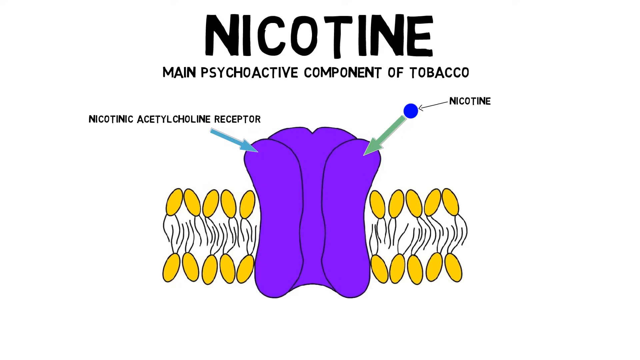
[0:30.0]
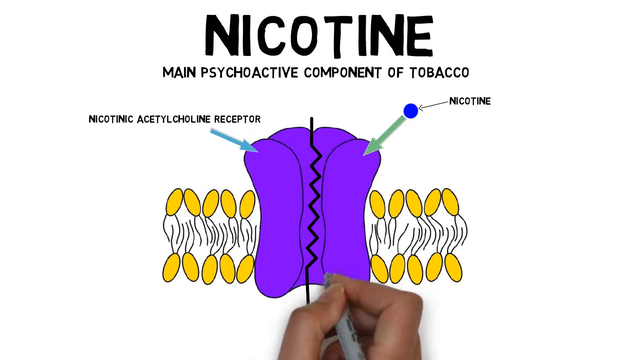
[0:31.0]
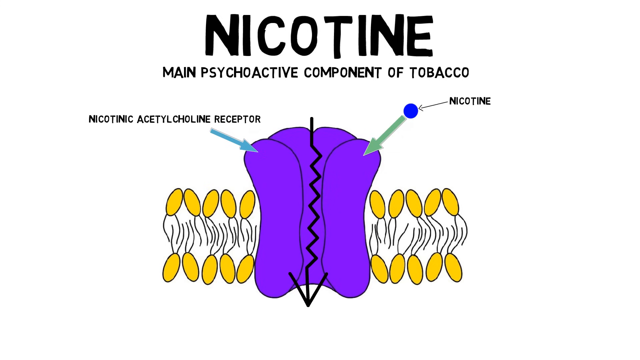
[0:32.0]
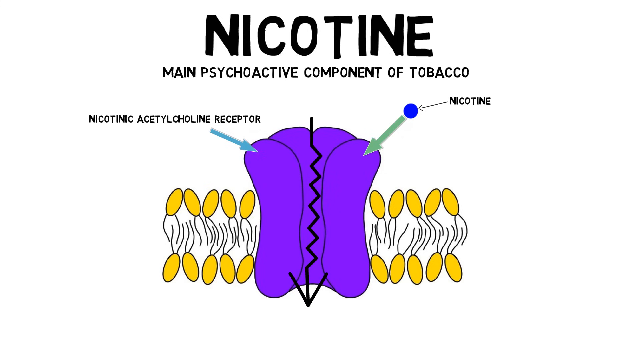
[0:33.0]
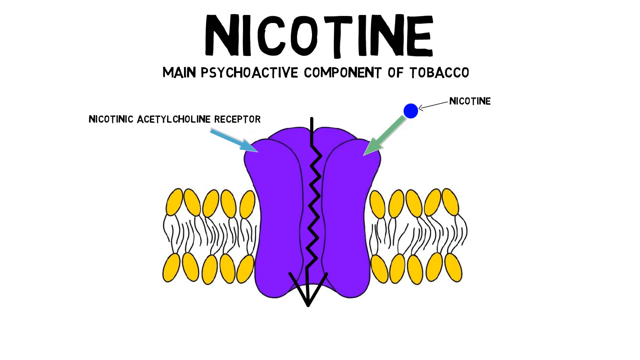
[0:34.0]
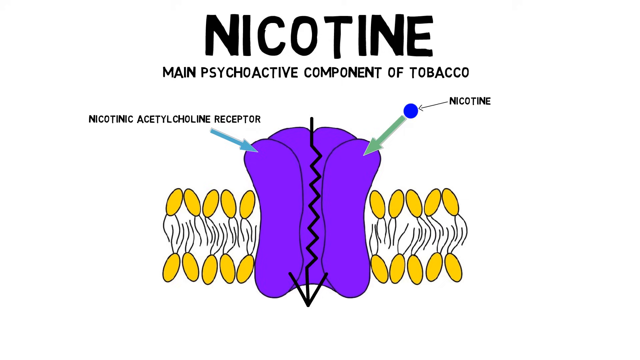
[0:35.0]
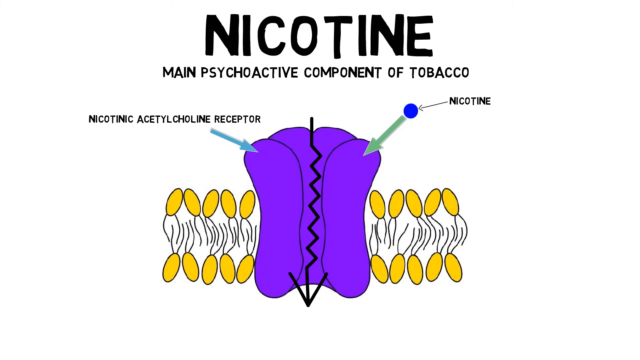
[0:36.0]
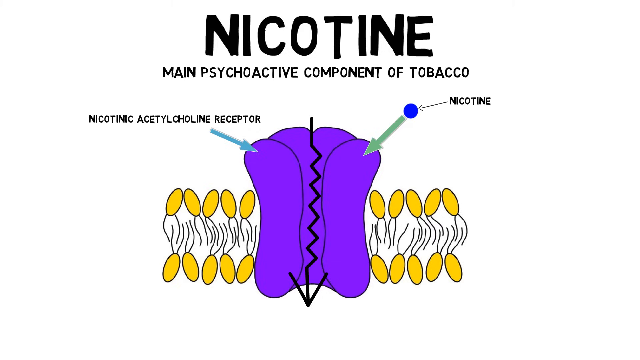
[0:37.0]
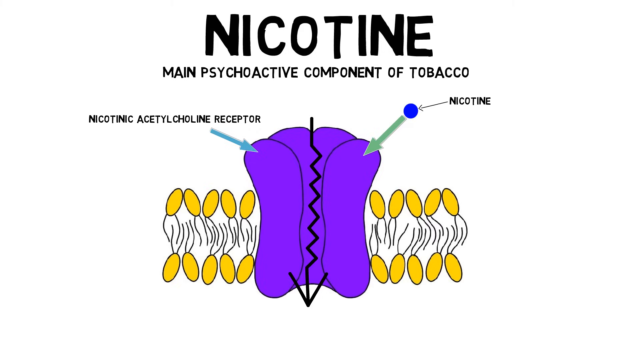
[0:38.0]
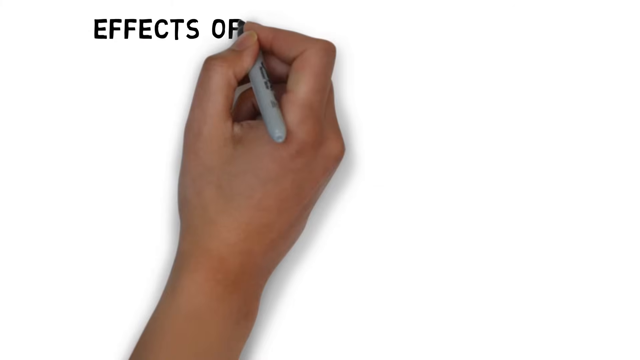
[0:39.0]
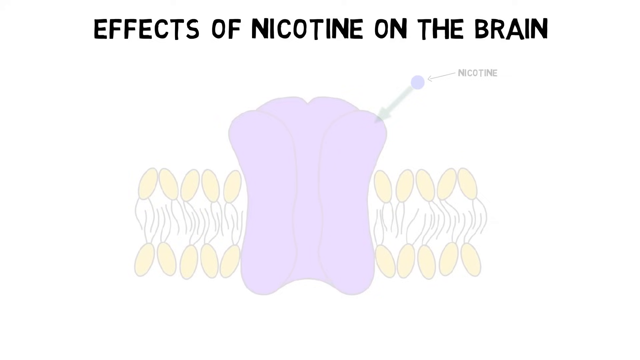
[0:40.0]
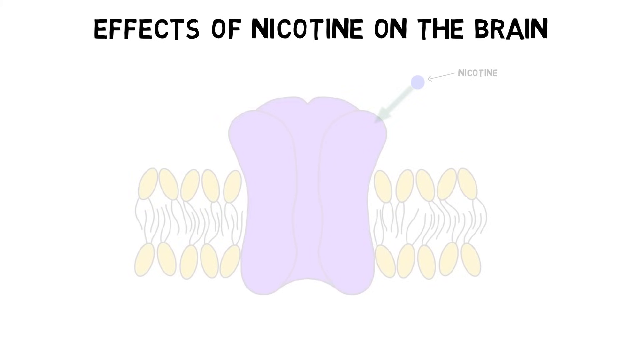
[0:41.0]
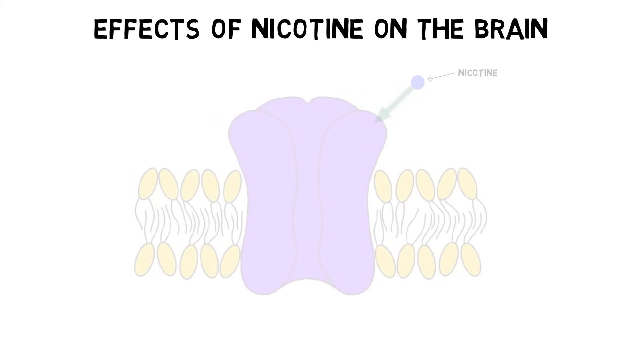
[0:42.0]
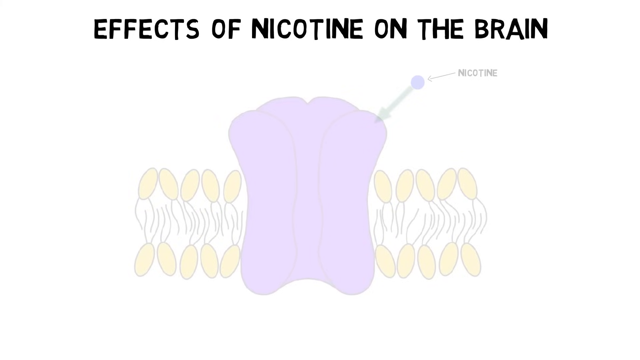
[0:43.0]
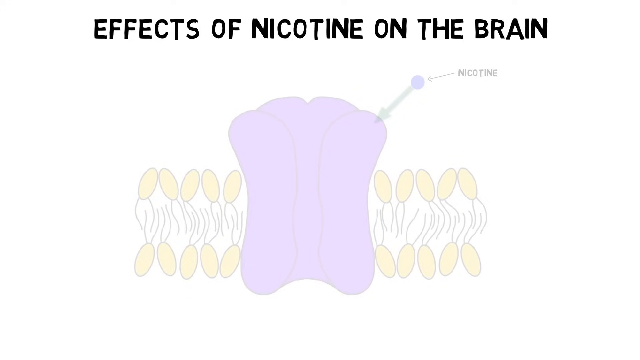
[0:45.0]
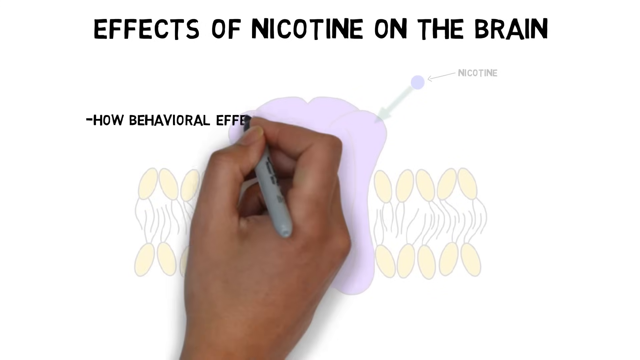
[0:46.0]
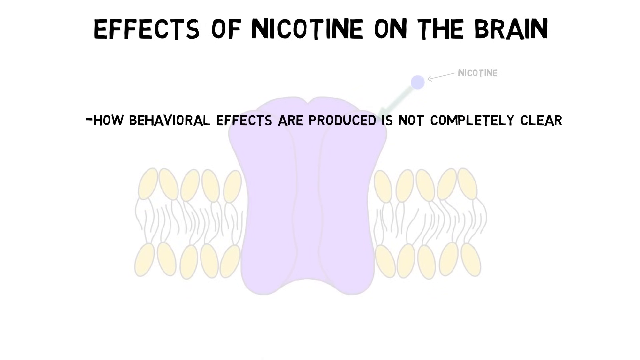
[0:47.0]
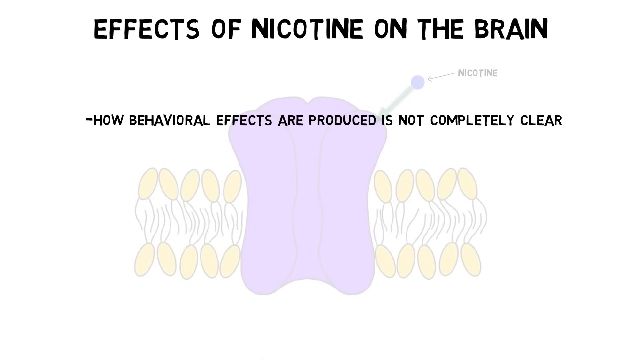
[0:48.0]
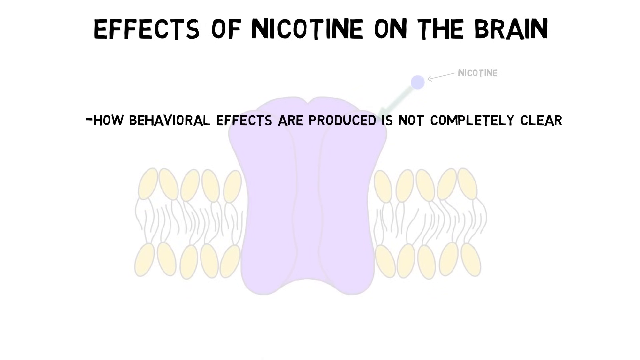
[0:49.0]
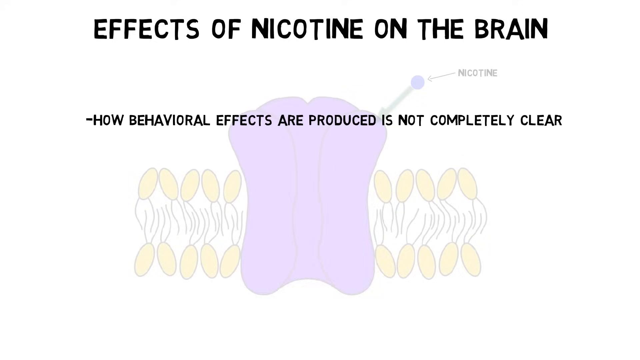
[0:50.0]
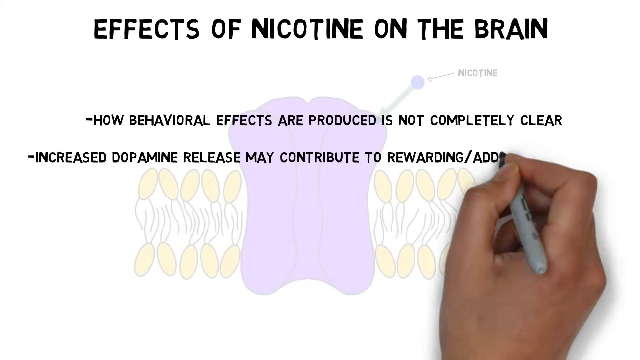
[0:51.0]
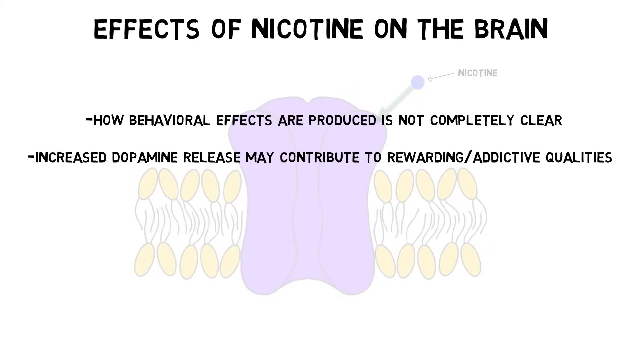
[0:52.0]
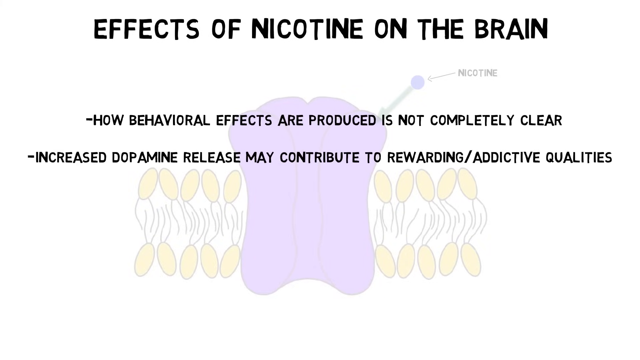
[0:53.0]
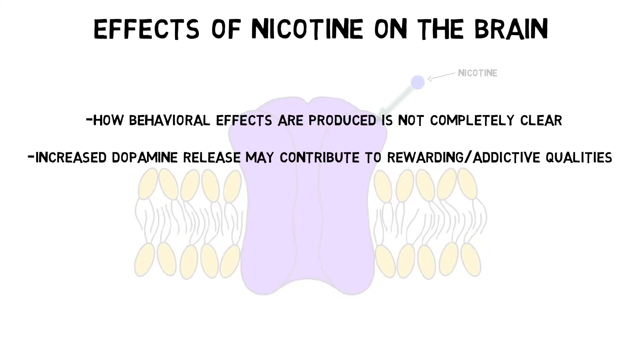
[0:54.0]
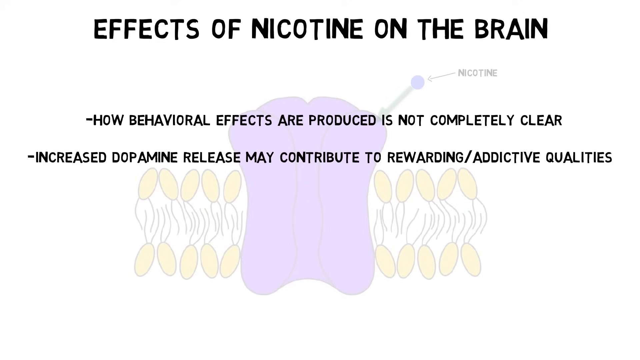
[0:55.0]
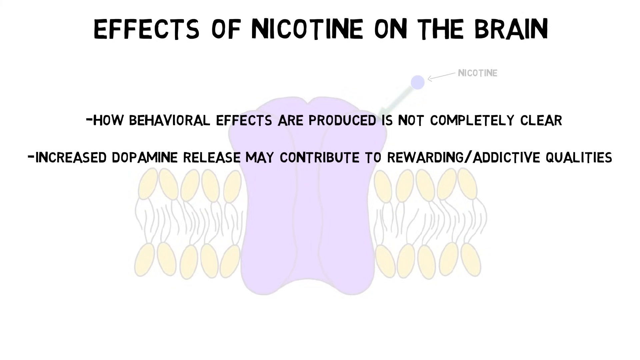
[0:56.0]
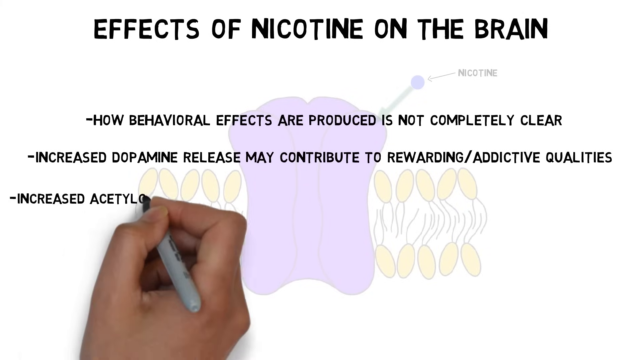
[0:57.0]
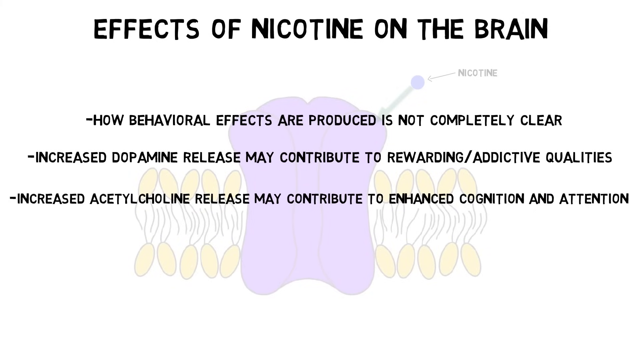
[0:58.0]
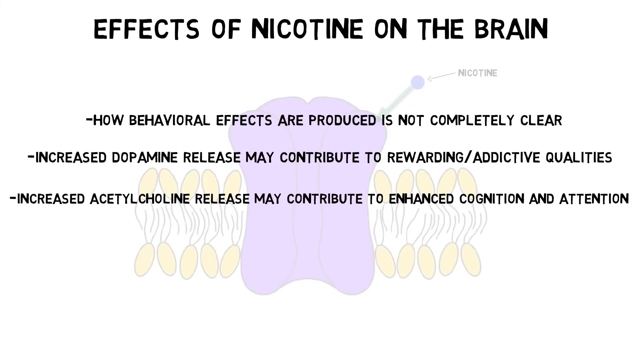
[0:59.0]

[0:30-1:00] The screen still has the title "nicotine" and the subtitle "main psychoactive component of tobacco", with the diagram in the main portion of the screen. The diagram has a purple symbol in the middle that sort of looks like a hot dog. A label pointing to it reads "nicotinic acetylcholine receptor". On either side of the purple symbol are yellow ovals with tails behind them, in two rows. To the right of the purple symbol, in the white space, is a blue circle labeled "nicotine", and a green arrow points from the blue circle to the purple symbol. The hand holding a pen then draws a vertical, downward-pointing arrow with a jagged stem in the middle of the purple symbol. The screen then shifts to a new screen.